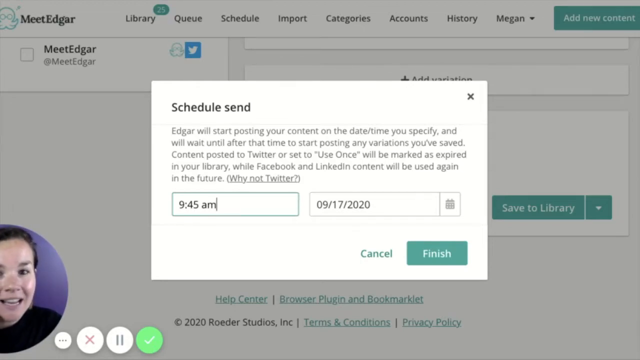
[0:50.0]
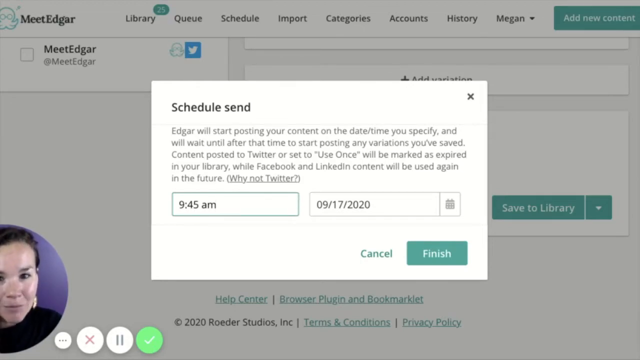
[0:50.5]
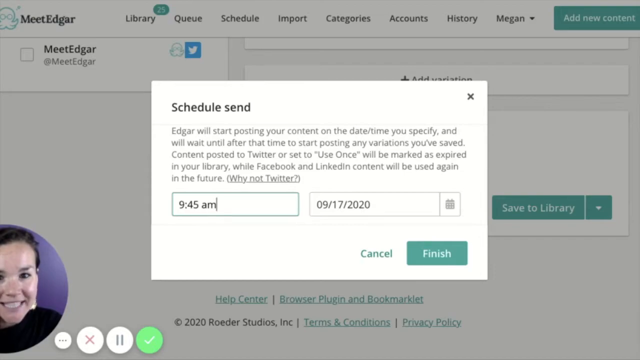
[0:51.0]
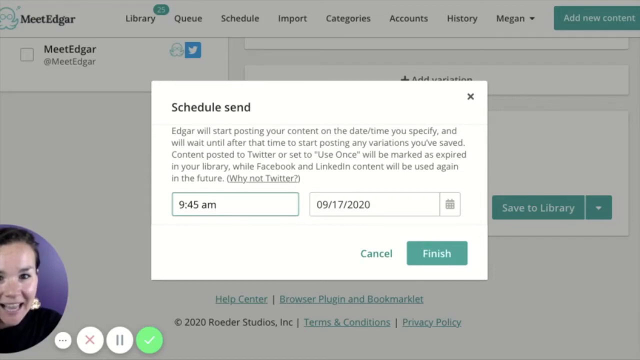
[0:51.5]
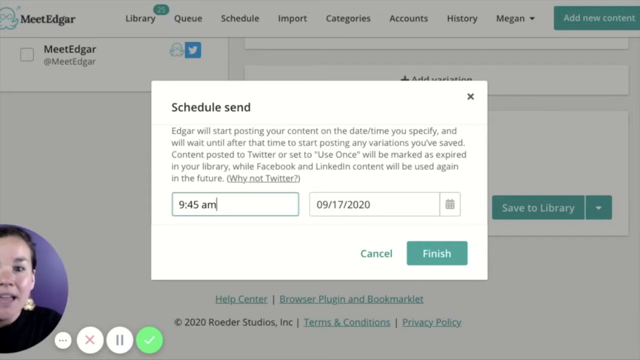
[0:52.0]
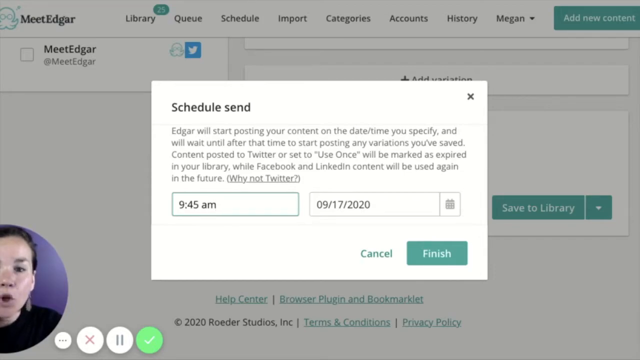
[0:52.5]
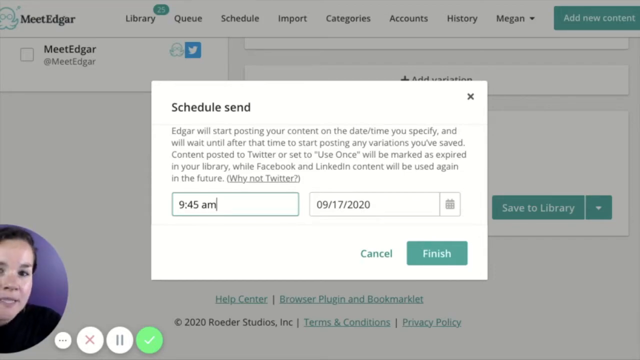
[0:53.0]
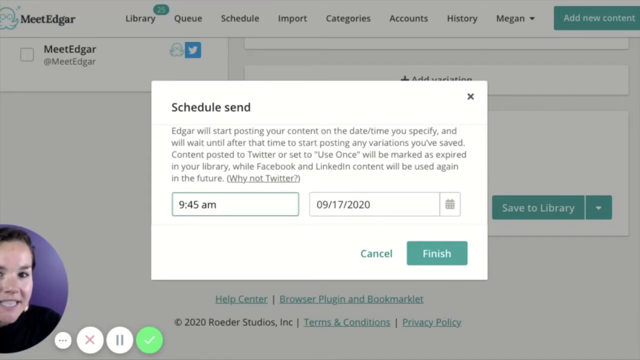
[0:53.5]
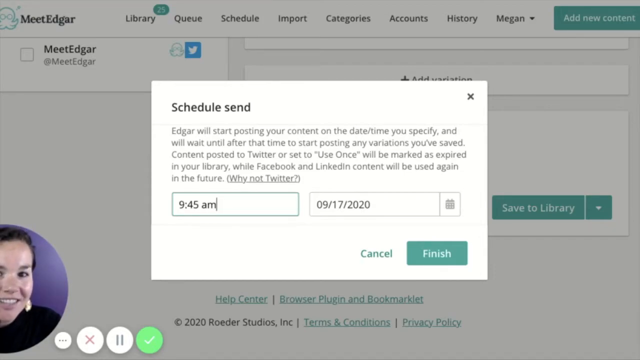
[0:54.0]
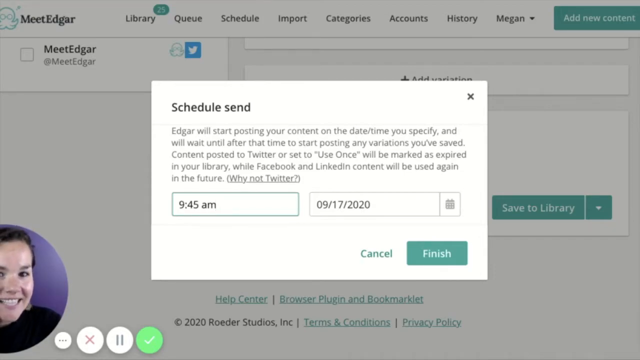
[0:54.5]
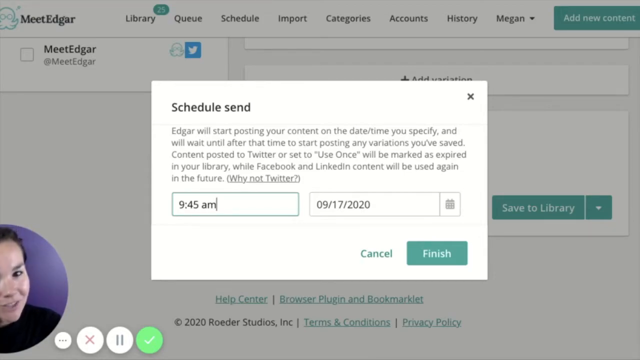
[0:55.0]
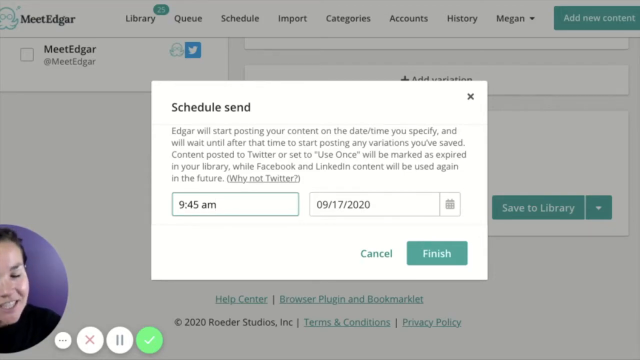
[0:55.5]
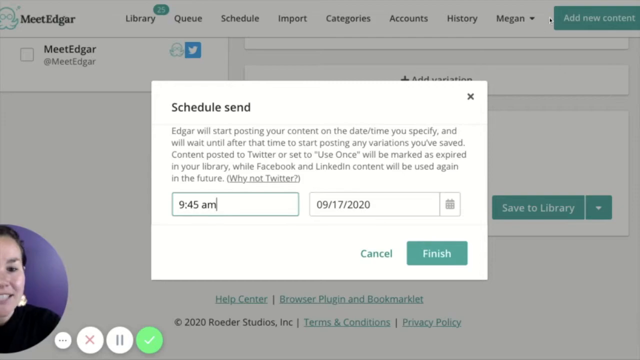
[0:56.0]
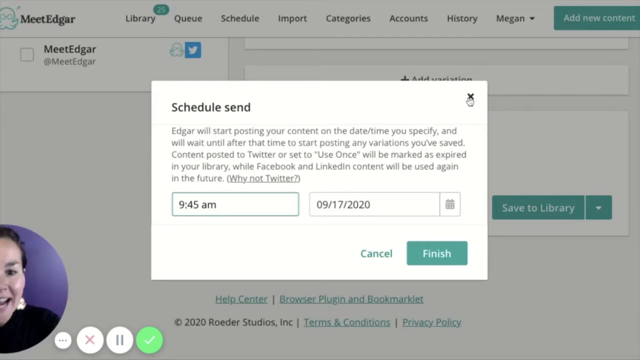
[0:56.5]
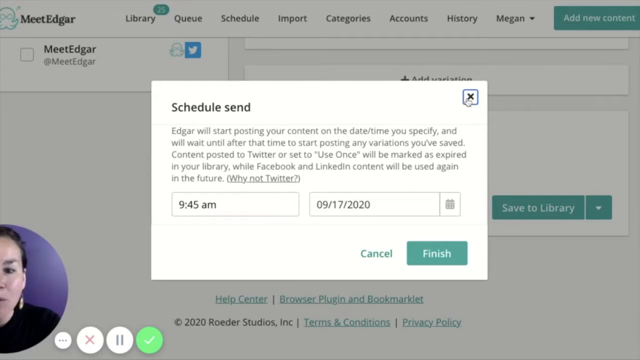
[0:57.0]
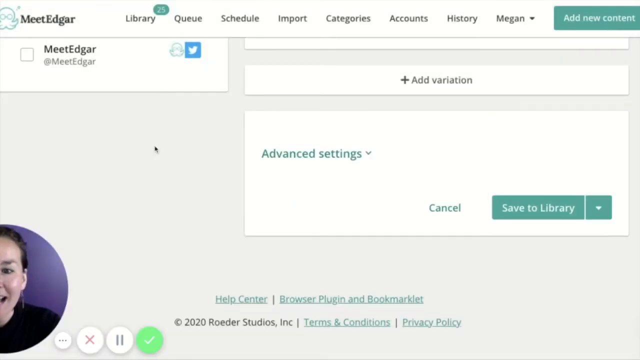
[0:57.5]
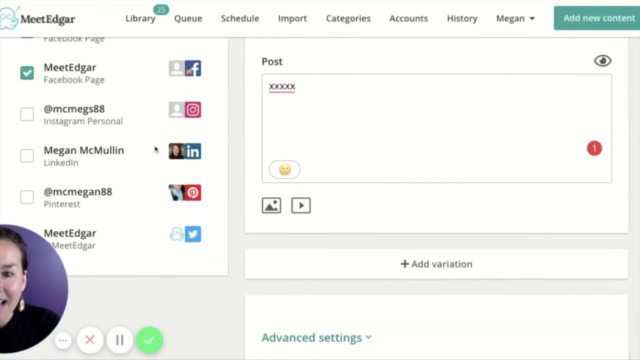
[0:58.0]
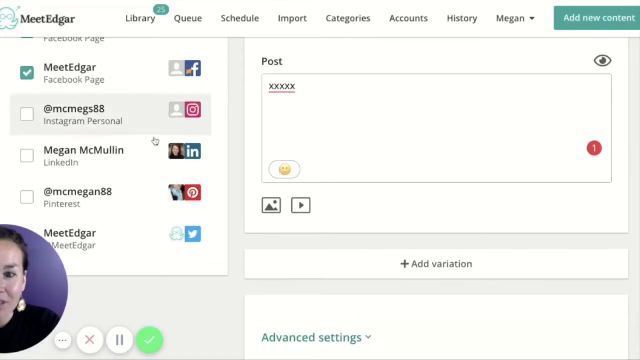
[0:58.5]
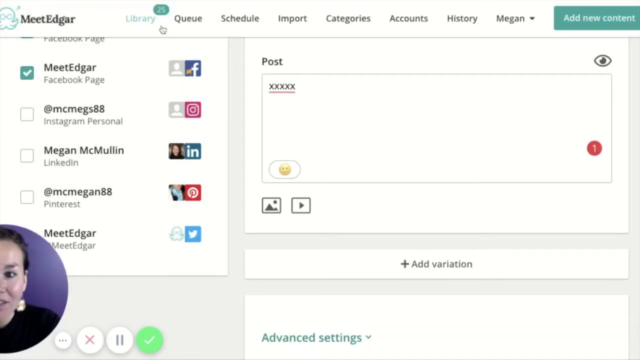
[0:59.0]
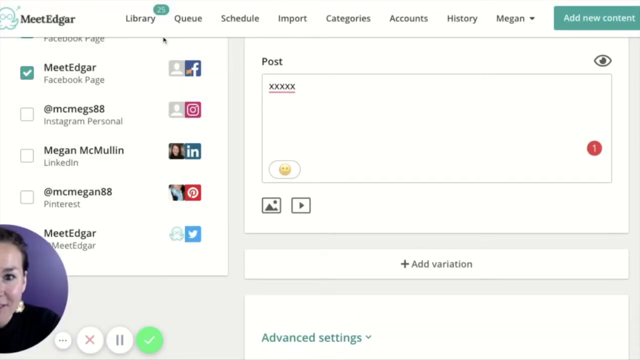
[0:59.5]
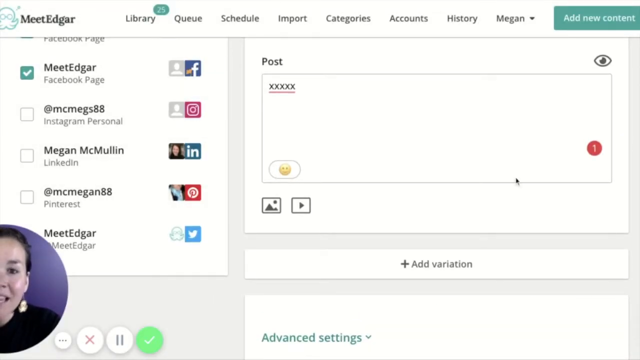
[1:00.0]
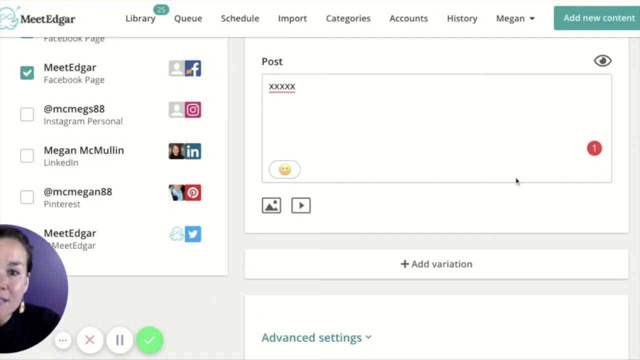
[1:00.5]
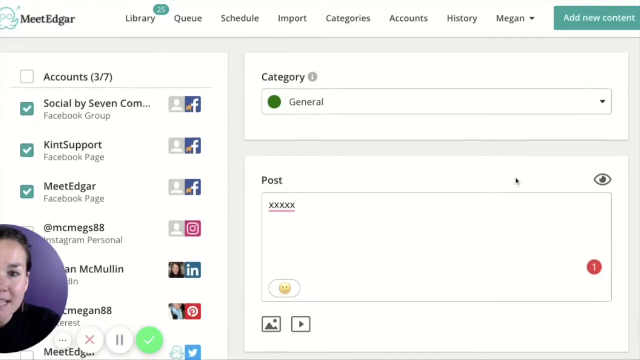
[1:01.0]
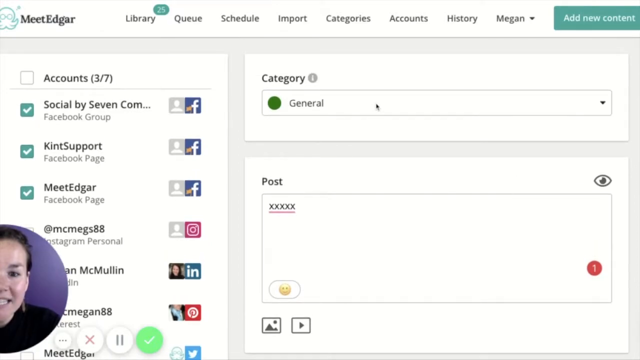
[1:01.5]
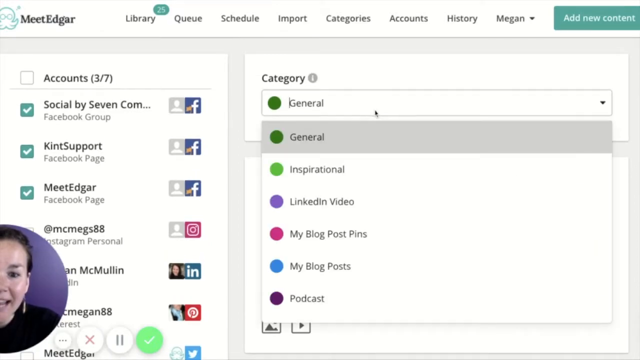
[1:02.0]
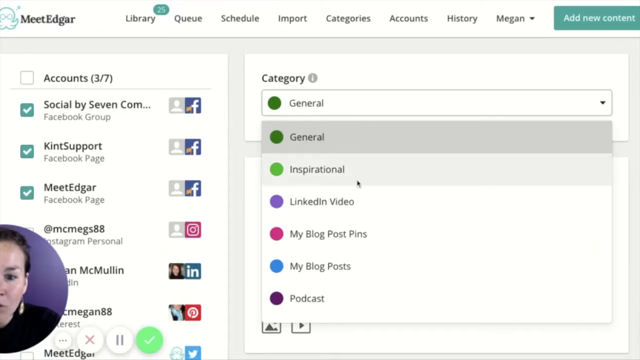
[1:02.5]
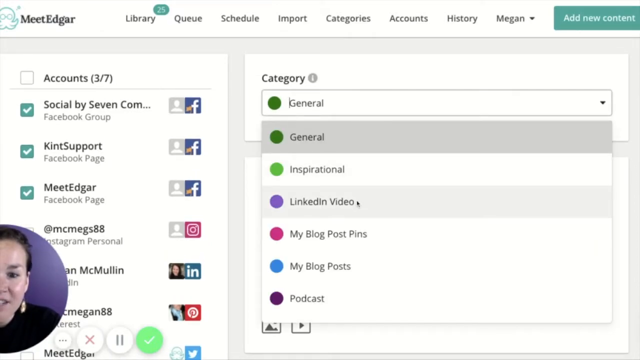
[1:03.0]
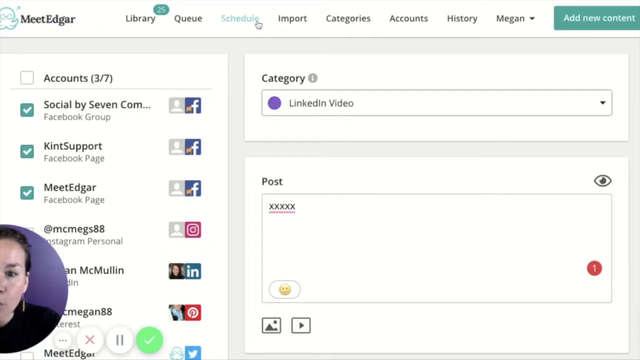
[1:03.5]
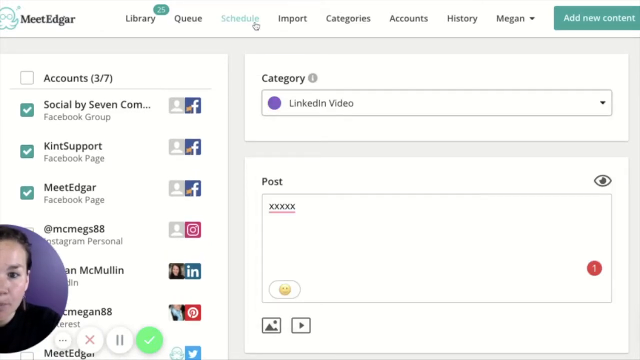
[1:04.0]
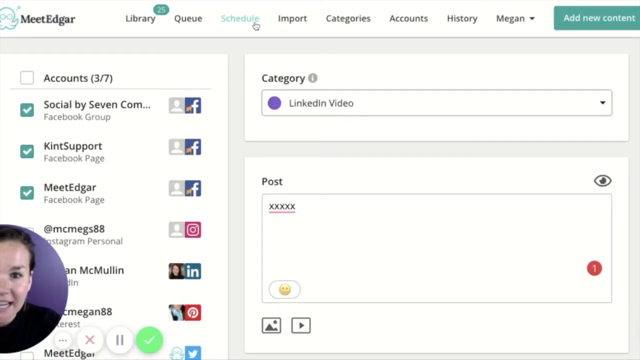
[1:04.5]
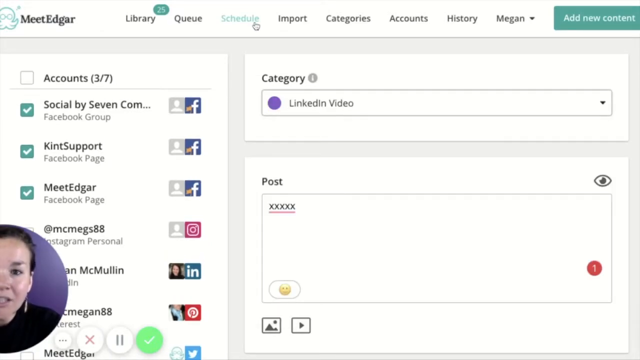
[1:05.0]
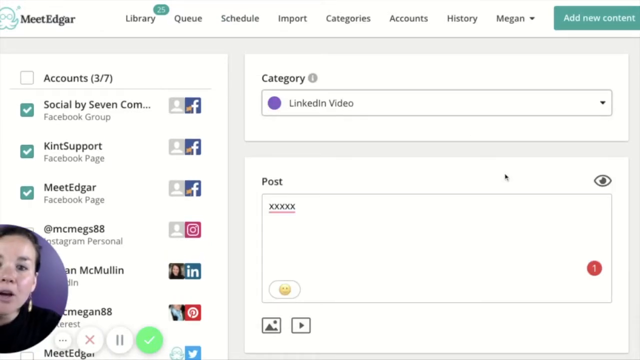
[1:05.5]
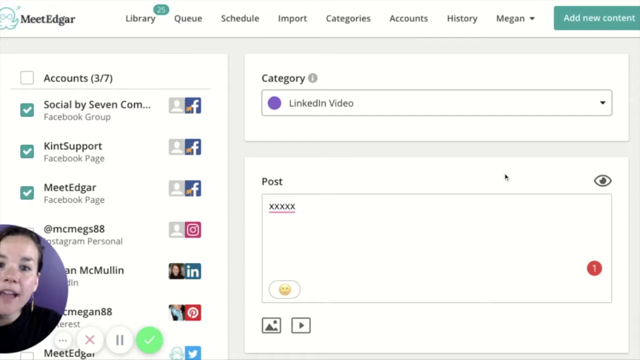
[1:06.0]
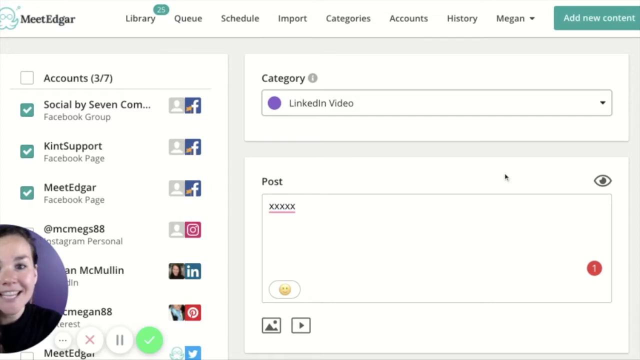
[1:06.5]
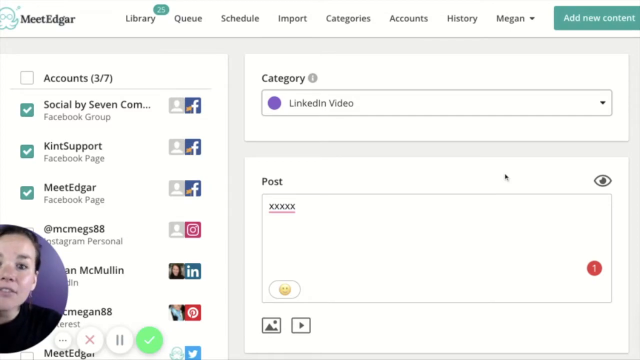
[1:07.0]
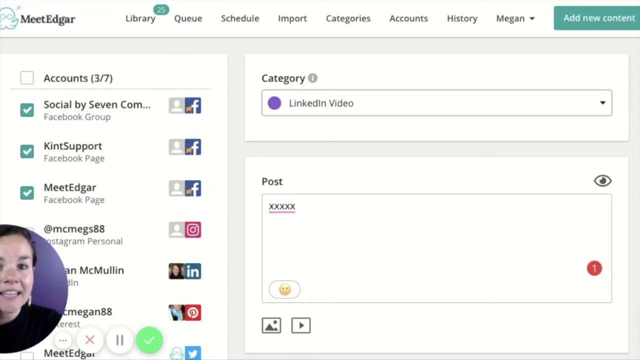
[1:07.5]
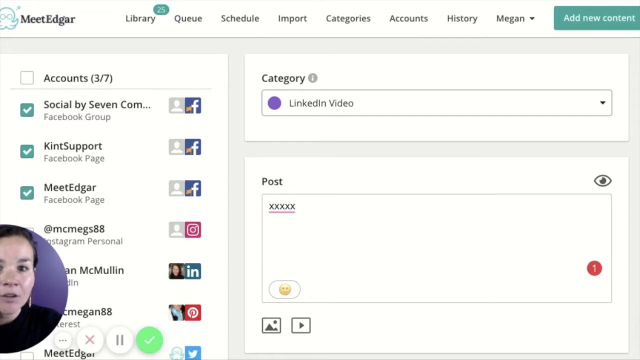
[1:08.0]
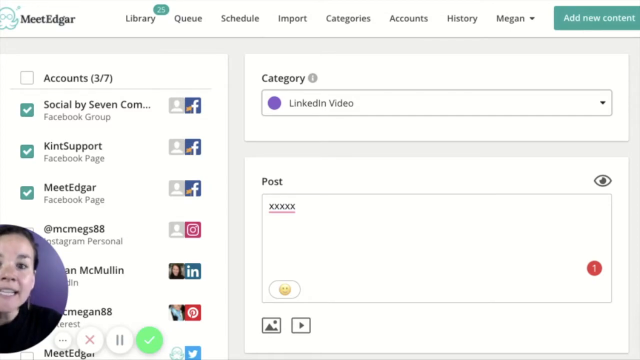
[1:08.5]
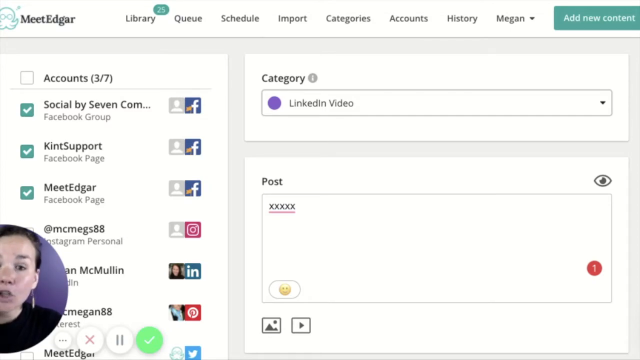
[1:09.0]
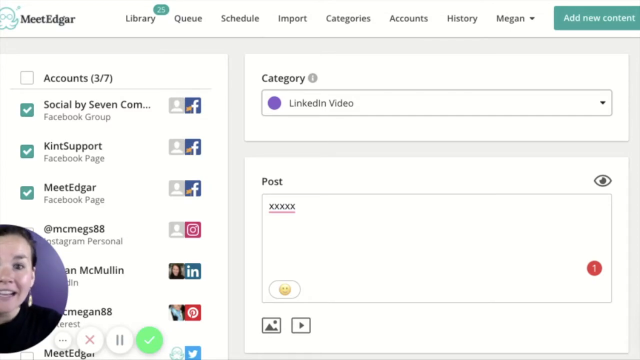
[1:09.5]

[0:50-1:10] The dark-haired woman continues to speak from the bottom left corner of the screen. She shows the page where a post can be scheduled by time and date, then closes that field without clicking either Cancel or Finish. She scrolls back up to show the checklist on the left side of the screen, and later moves her cursor to the list of categories: General, Inspirational, Linked-in Video, My Blog Post Pins, My Blog Posts, and Podcast. Instead of typing a real post, she leaves a number of Xs in the post field, apparently for illustration, and shows how to move from one category to another.